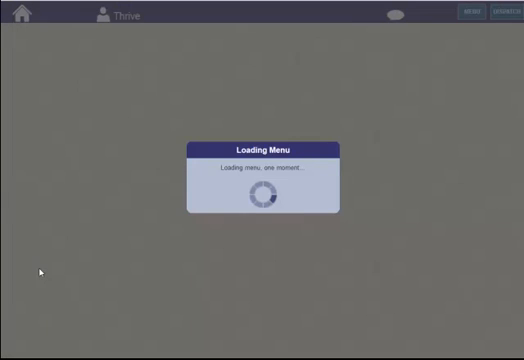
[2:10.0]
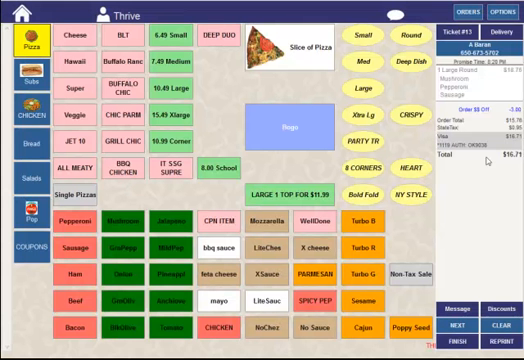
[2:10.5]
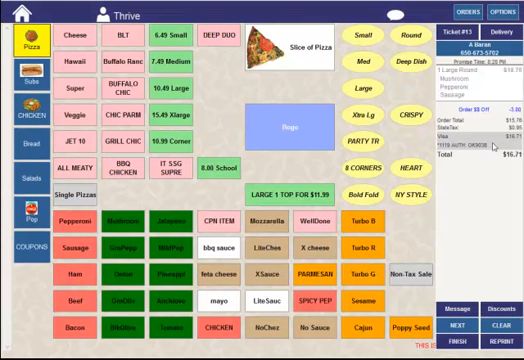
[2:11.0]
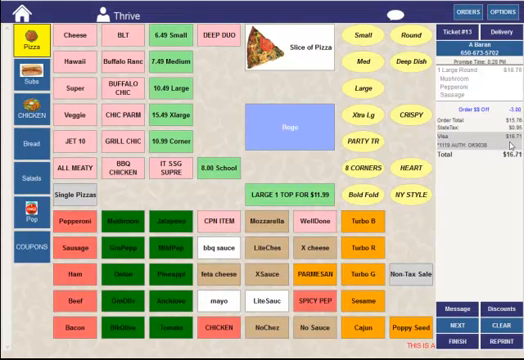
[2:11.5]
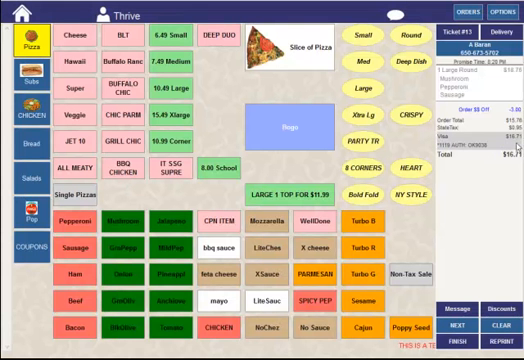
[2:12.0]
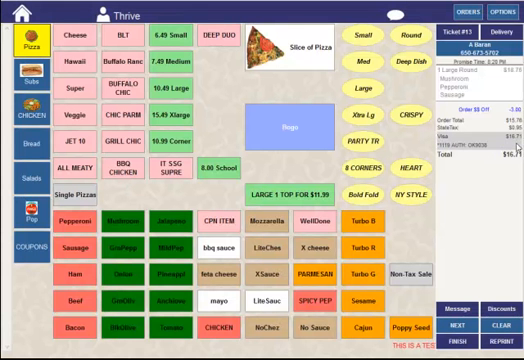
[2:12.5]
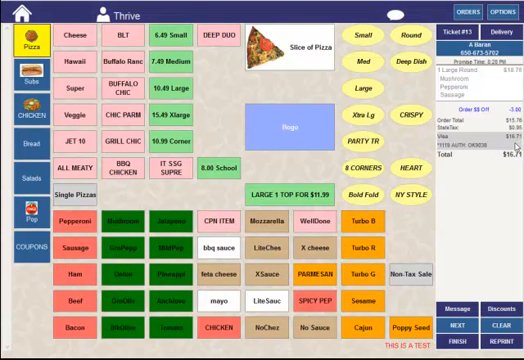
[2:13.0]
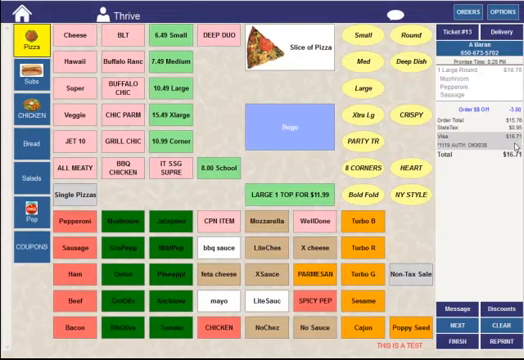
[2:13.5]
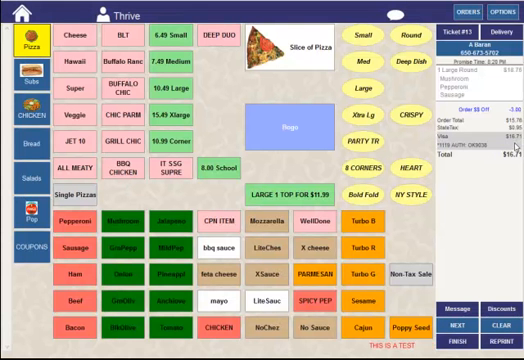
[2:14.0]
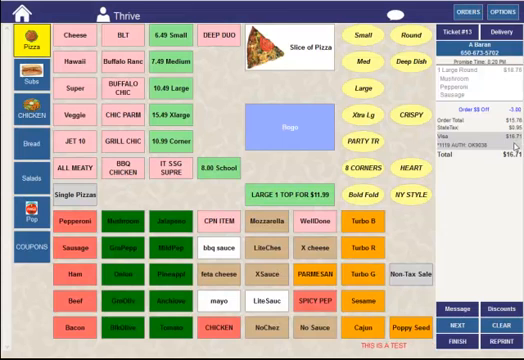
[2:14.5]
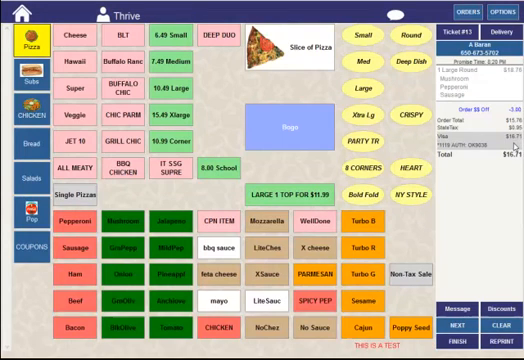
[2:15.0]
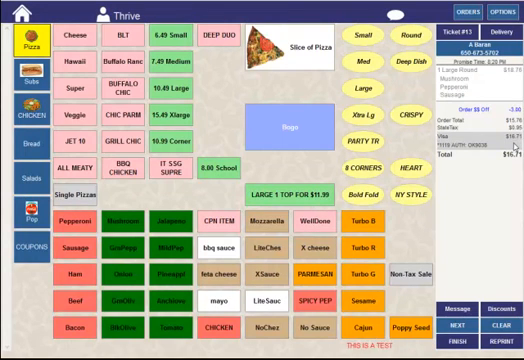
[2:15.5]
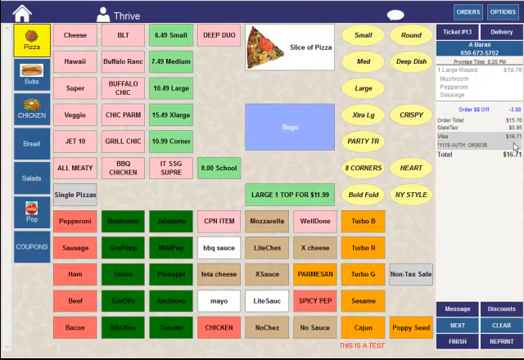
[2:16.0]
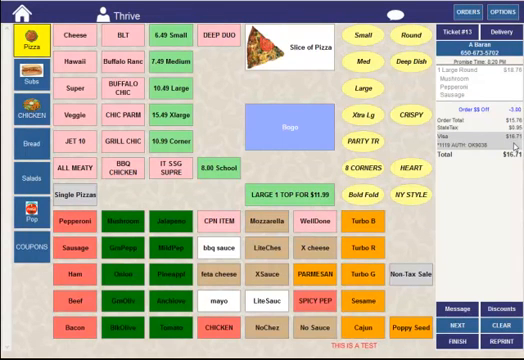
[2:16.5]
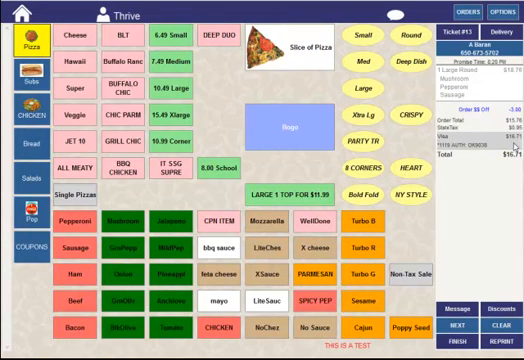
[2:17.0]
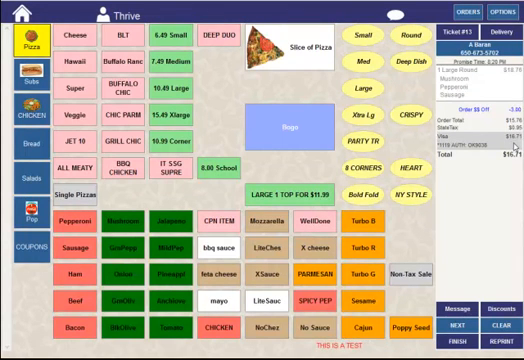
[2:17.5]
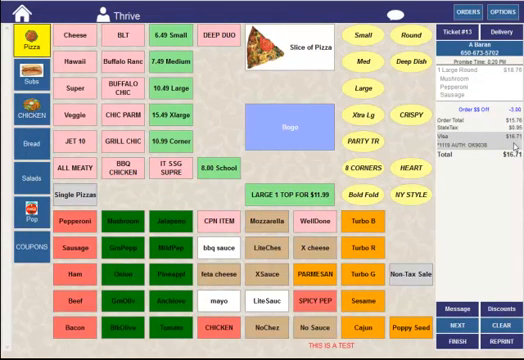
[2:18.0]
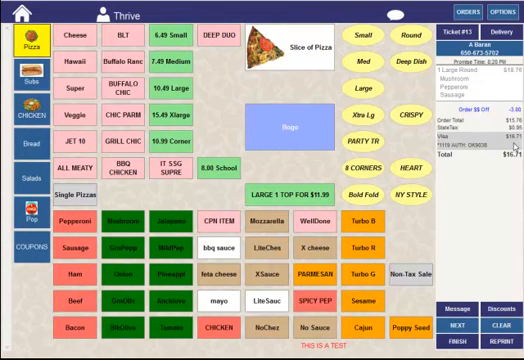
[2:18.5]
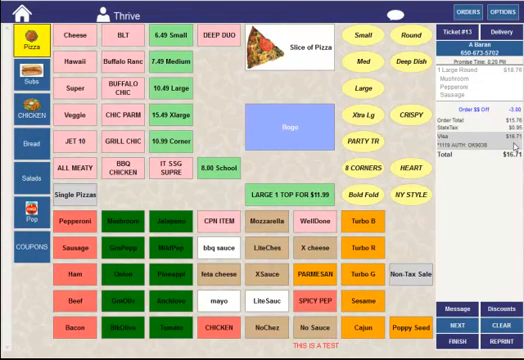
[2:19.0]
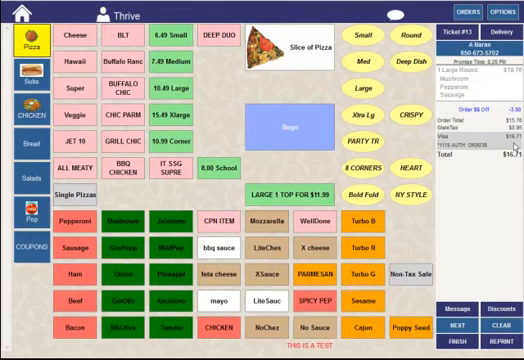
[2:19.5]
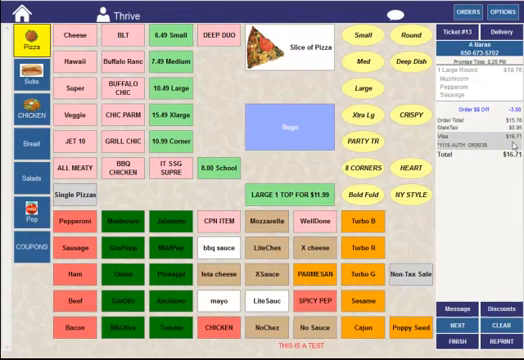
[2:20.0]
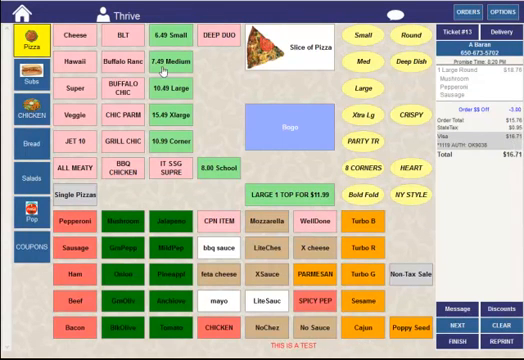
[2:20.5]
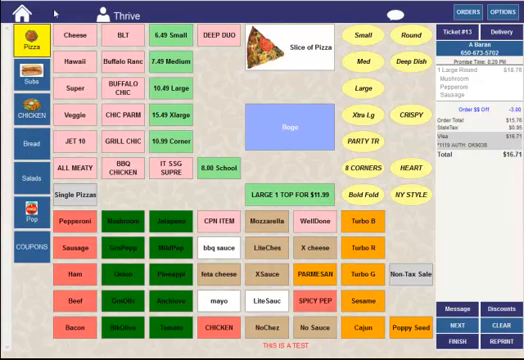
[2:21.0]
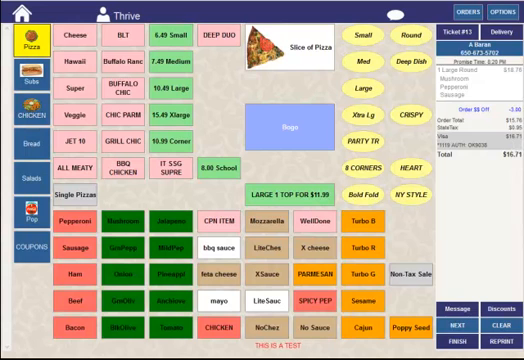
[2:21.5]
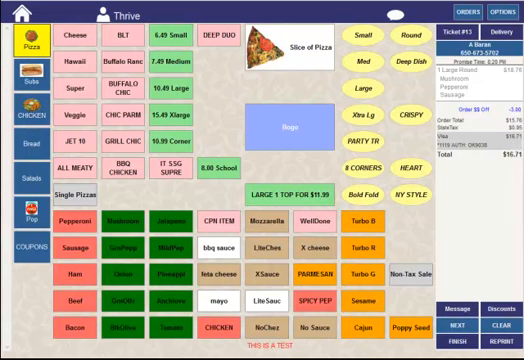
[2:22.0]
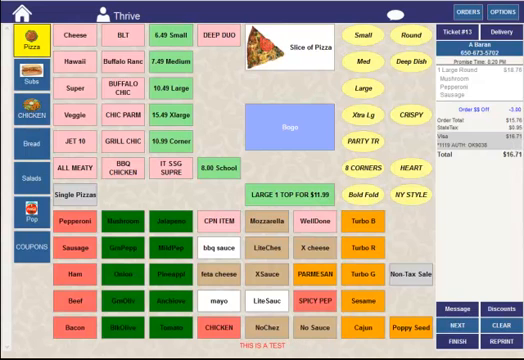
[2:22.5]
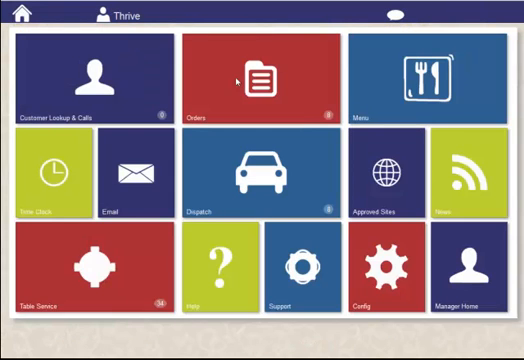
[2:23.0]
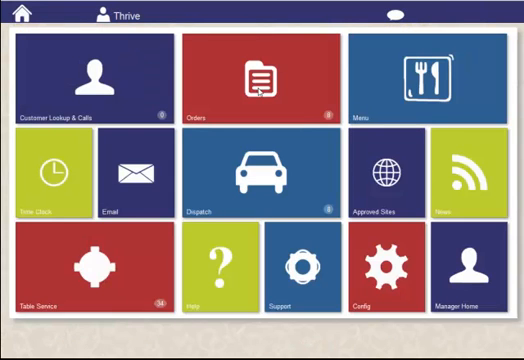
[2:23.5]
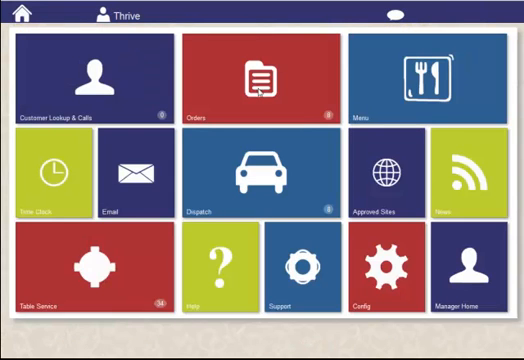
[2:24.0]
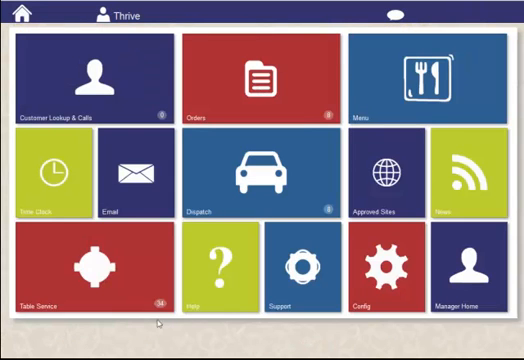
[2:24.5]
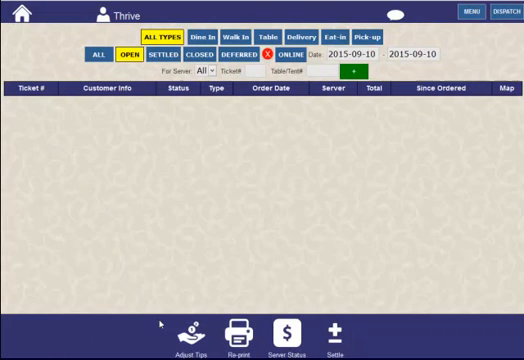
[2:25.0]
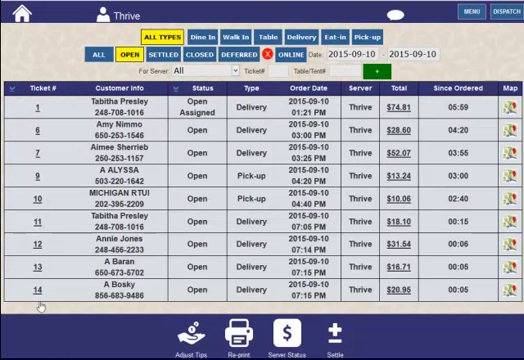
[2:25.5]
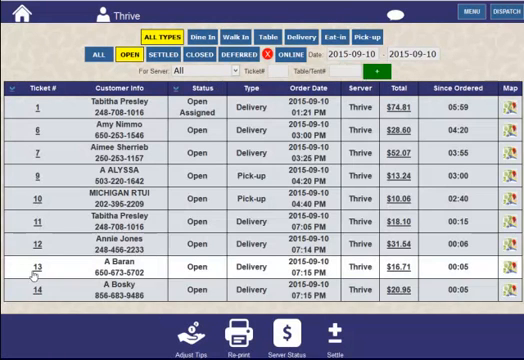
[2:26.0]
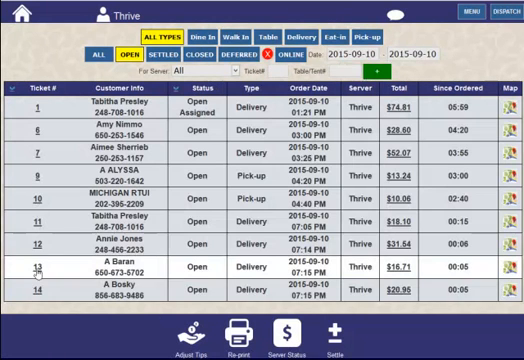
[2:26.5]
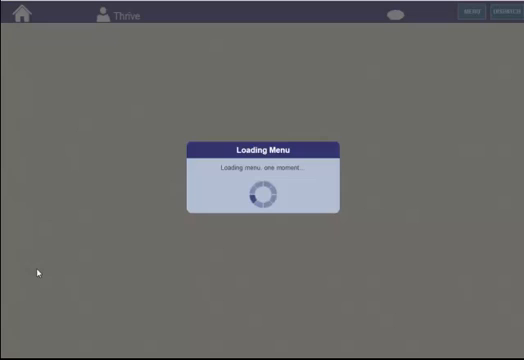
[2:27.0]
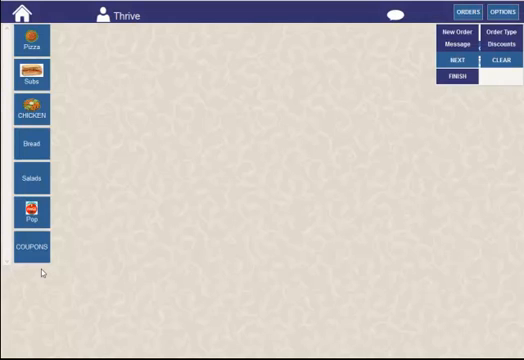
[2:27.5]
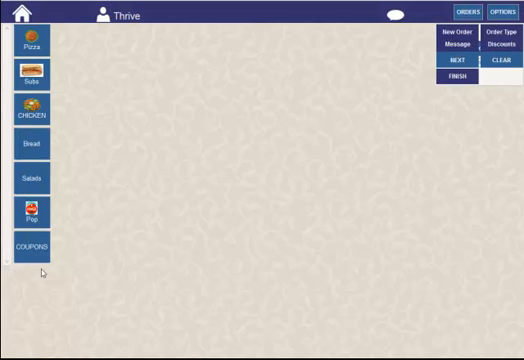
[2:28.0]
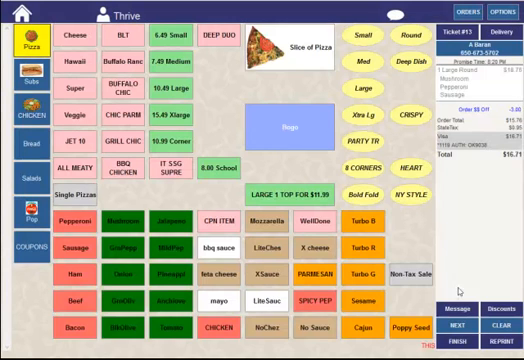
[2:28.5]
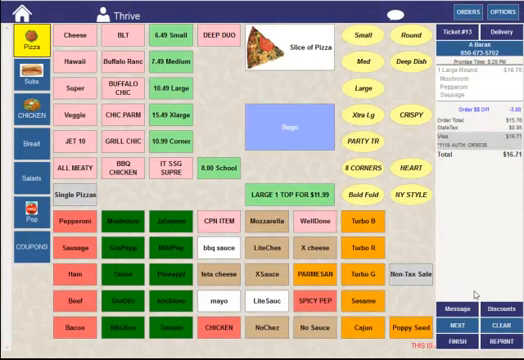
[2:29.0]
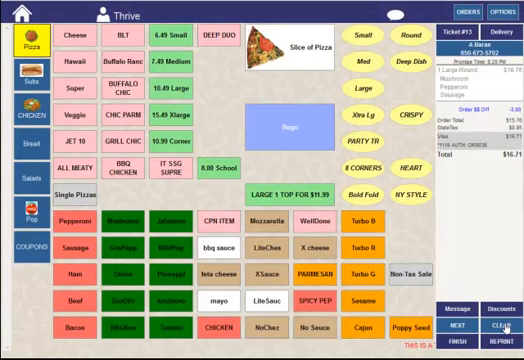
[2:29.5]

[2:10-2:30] A loading icon appears reading "loading menu one moment", and then the menu is shown, with the type of cheese, the toppings, the size of the pizza and the sauces. Barron's order seems to have been clicked again; his total is shown on the right side along with the pizza ordered: one large round pizza with mushroom, pepperoni and sausage. The order has $3 off and the total is $16.71. The home icon is then clicked, and the colorful red, blue, yellow and white icons appear on the screen.